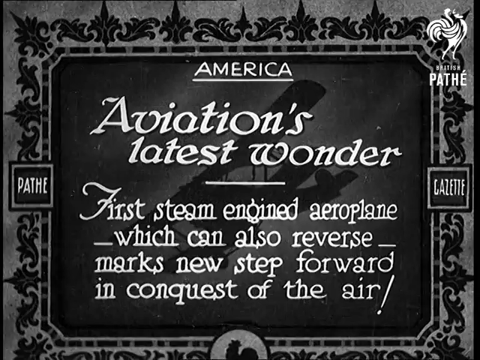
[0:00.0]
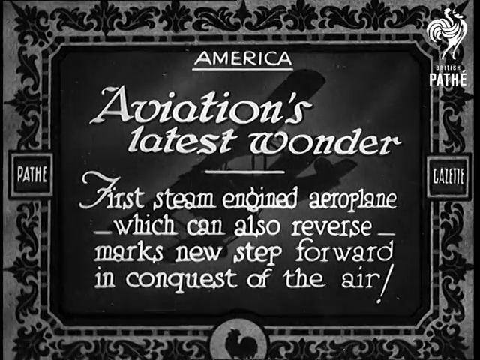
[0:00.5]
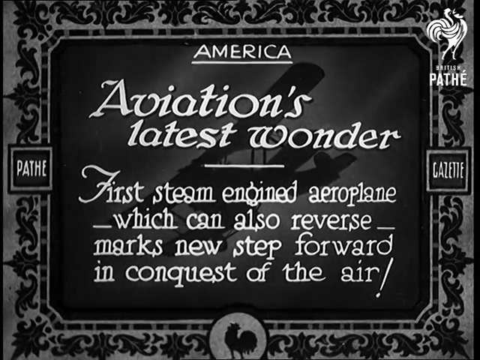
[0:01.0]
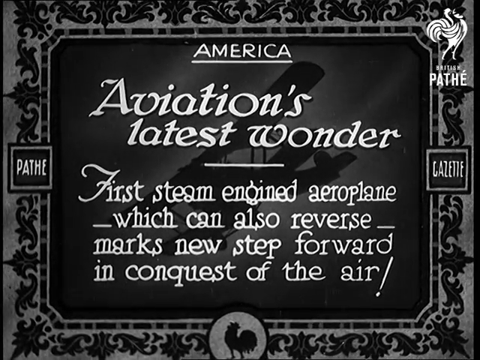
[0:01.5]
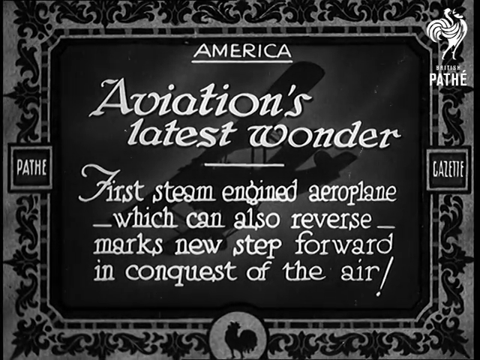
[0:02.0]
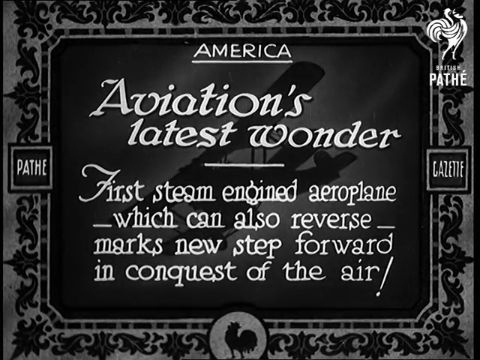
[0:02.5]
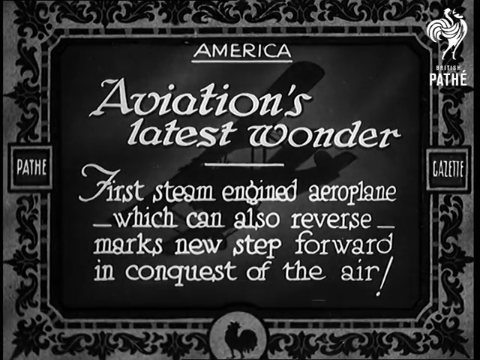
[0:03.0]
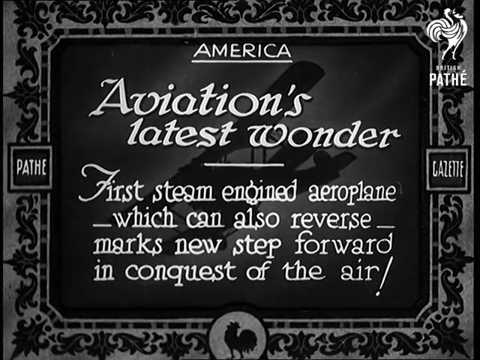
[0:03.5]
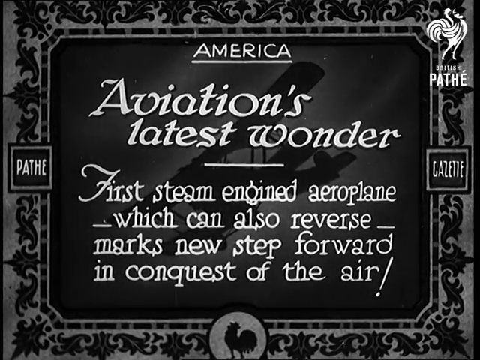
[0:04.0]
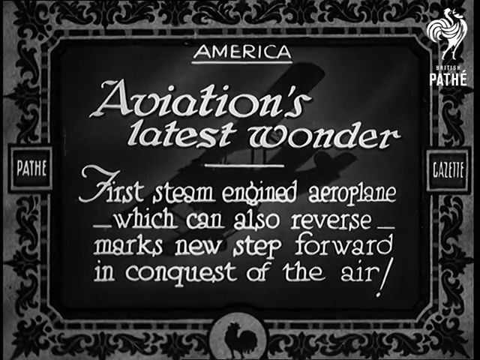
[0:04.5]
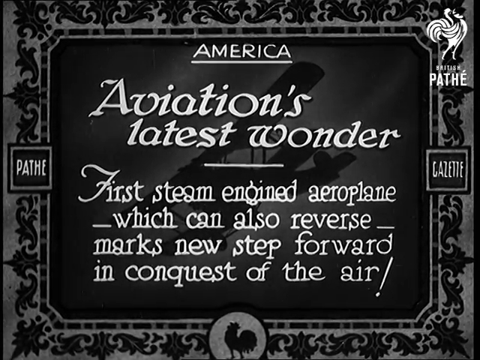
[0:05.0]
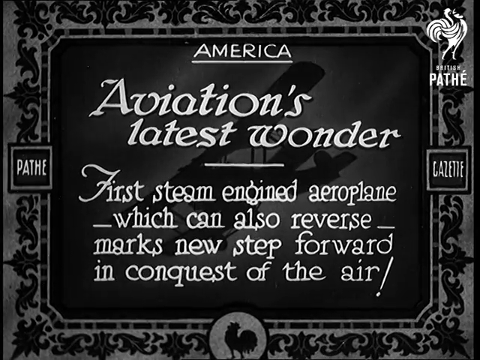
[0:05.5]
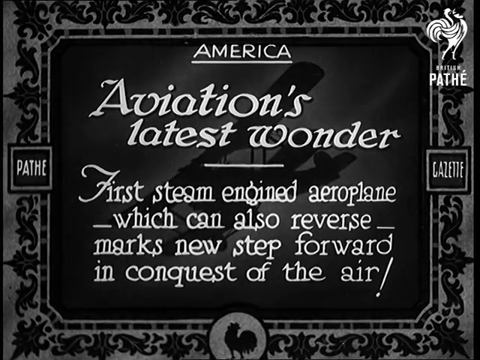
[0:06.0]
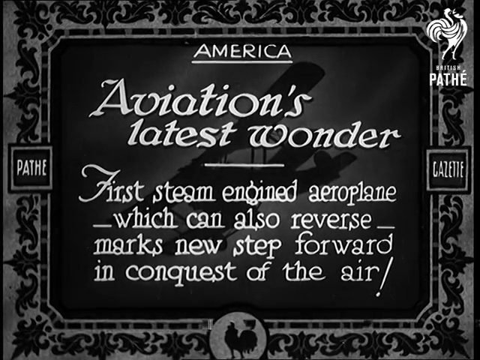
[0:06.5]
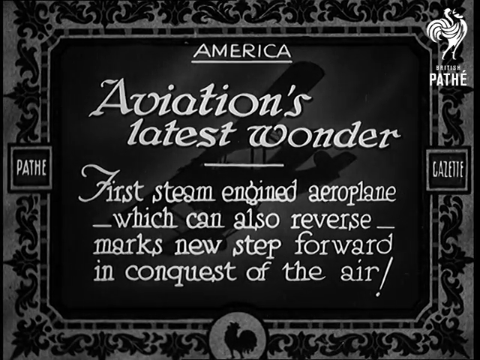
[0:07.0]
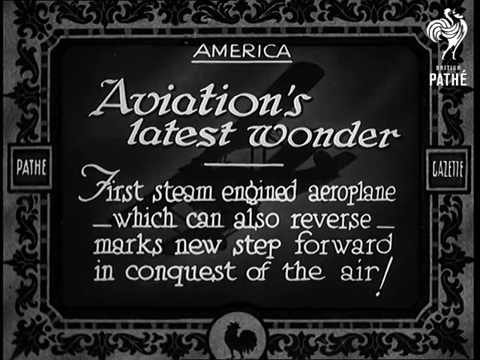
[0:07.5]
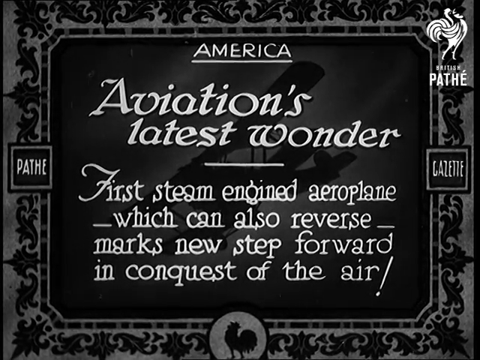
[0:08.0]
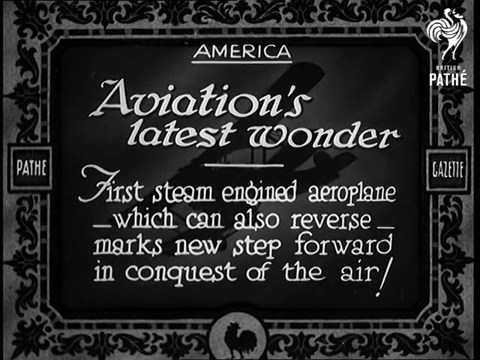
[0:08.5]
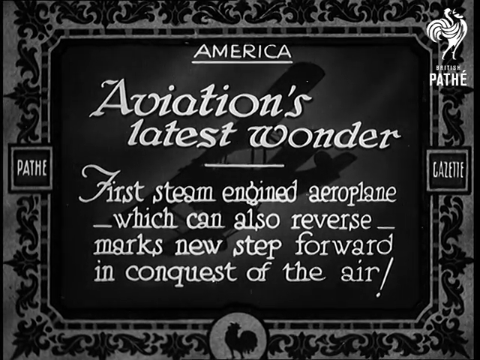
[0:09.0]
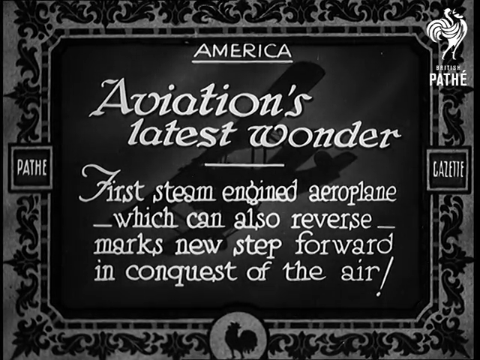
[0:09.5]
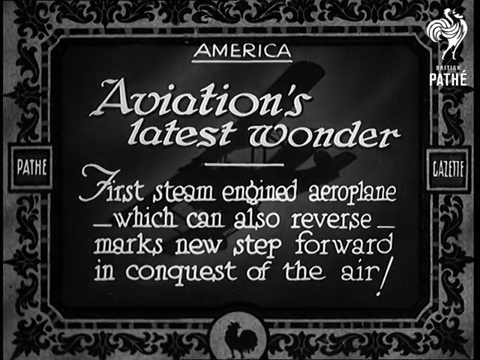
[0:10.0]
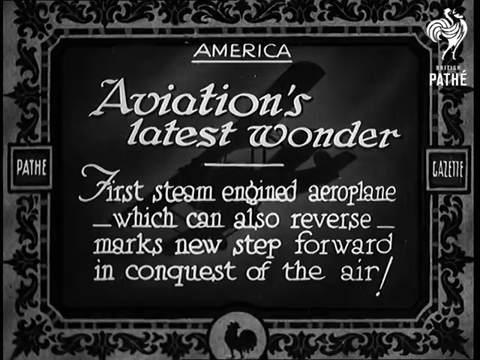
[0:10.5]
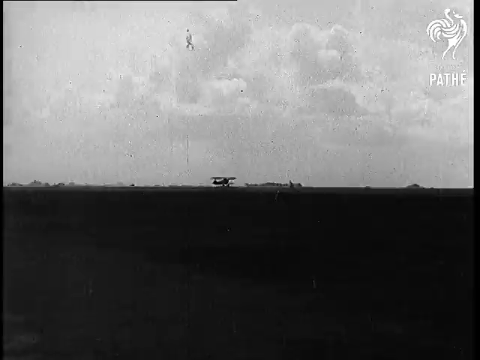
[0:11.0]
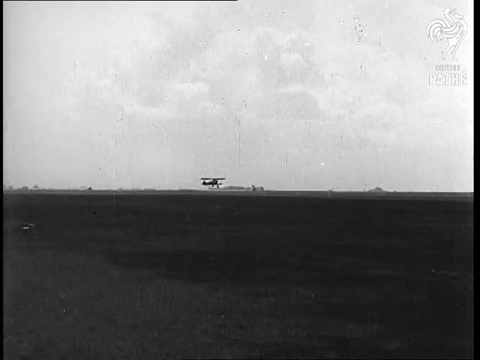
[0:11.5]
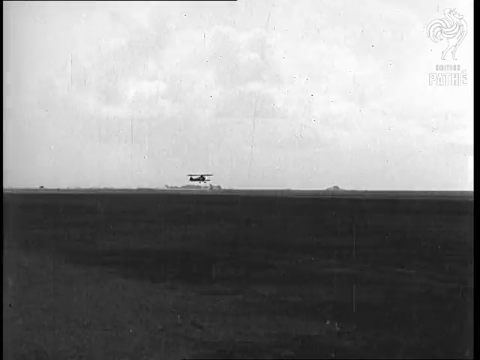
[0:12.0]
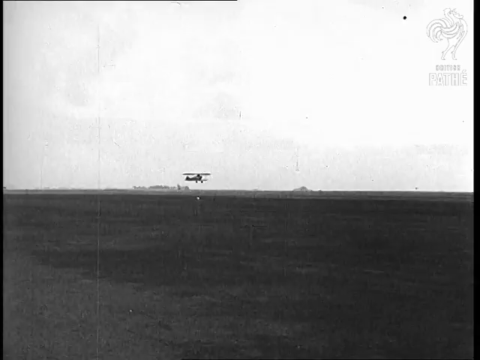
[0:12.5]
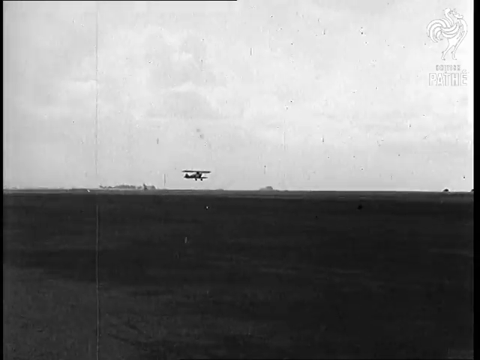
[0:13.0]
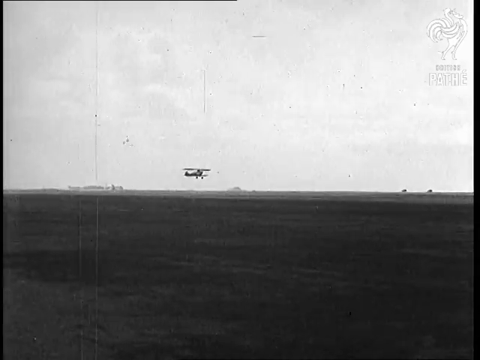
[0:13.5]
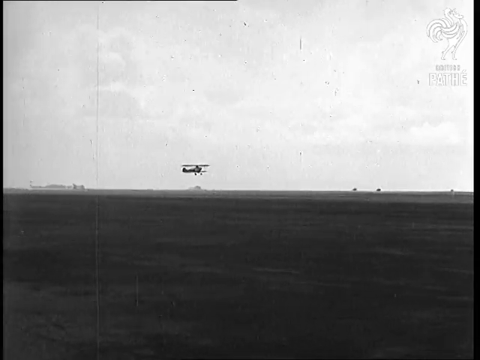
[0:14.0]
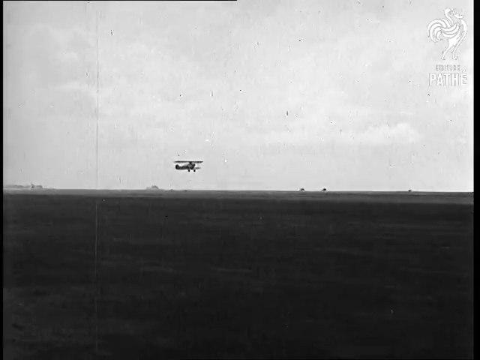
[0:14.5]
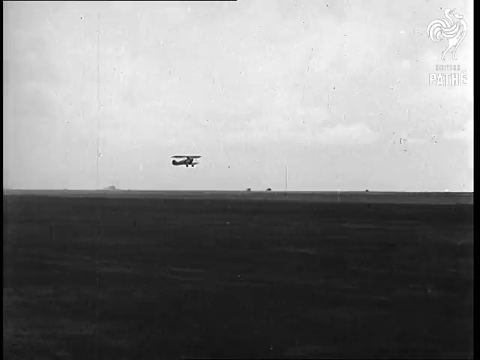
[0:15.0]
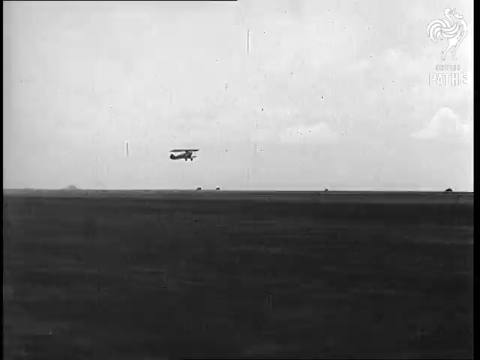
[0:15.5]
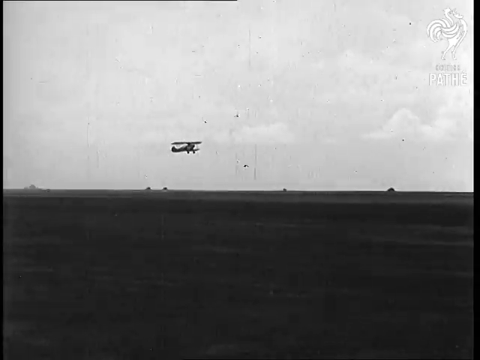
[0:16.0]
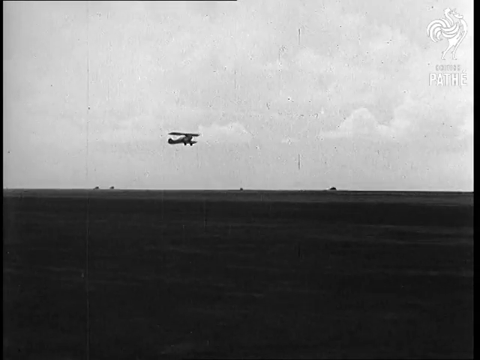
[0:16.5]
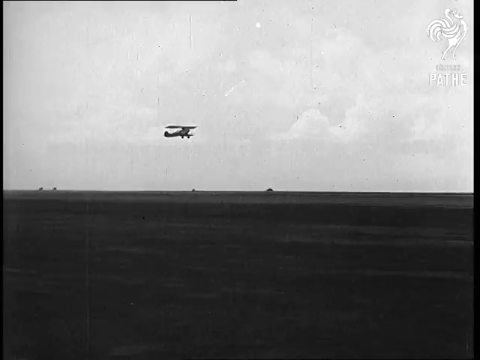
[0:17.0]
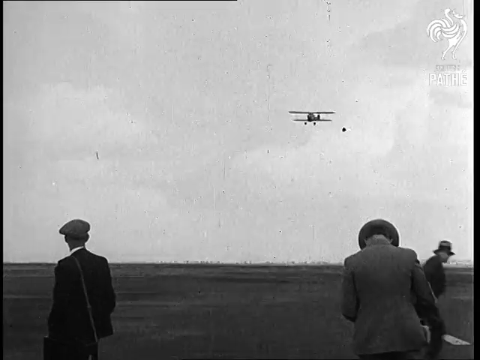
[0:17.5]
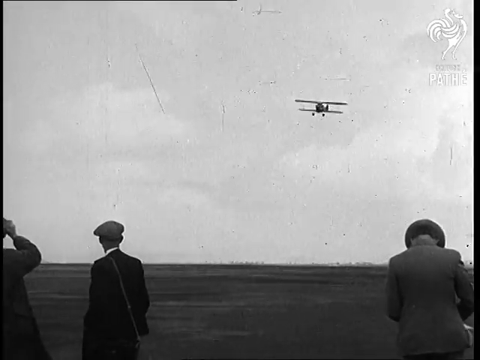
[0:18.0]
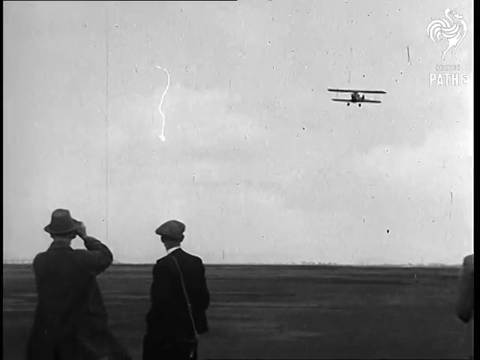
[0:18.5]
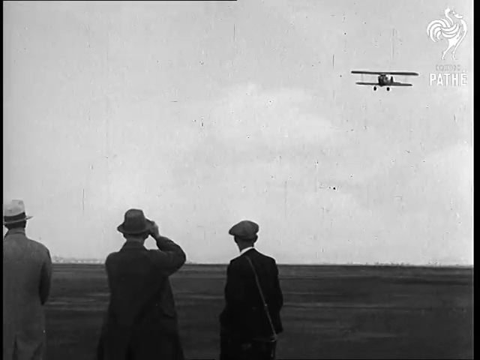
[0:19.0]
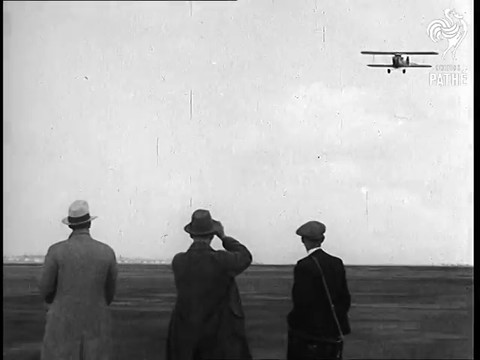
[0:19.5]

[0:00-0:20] The video opens on a black and white image with a border along the top, bottom and sides that has a kind of floral print. The middle is a dark background with white text reading "America" at the top, and underneath, "aviation's latest wonder." Additional text reads "Steam engine airplane, which can also reverse, marks new step forward in conquest of air." The camera moves slightly, roughly left to right and up and down, over the text and image. In the upper right-hand corner is a logo of some sort that says "Gazette," with what looks almost like a poultry or chicken of some sort. The video then transitions to black and white footage of a plane taking off in the distance, with gray clouds in the background. The camera gets slightly closer and closer as the airplane continues to climb after takeoff.